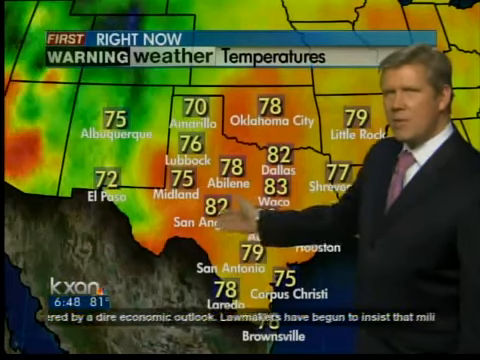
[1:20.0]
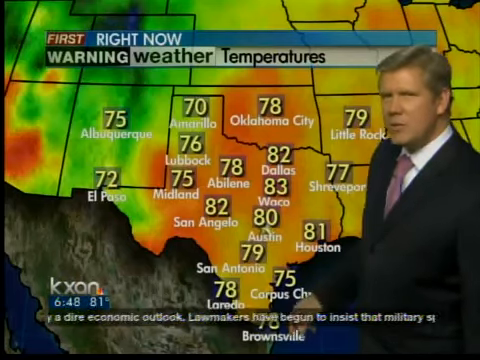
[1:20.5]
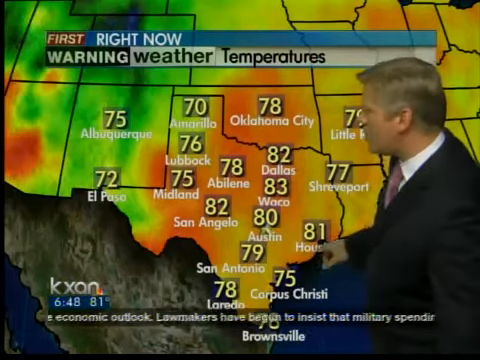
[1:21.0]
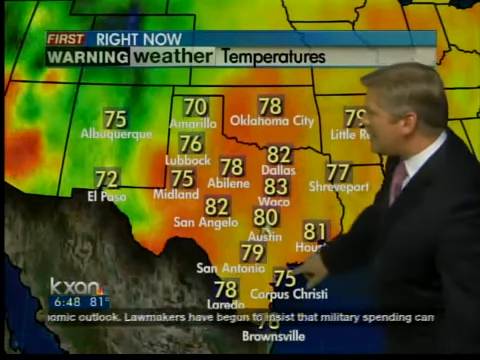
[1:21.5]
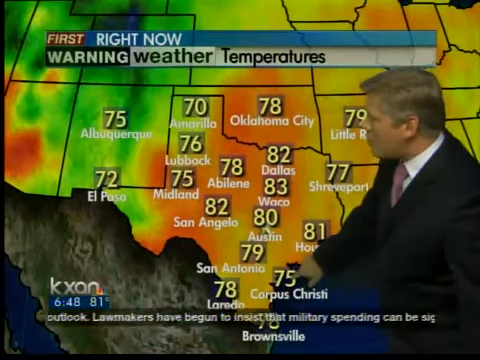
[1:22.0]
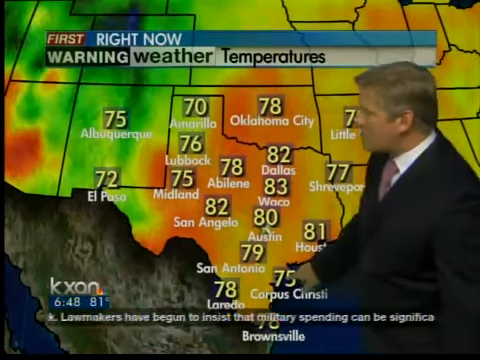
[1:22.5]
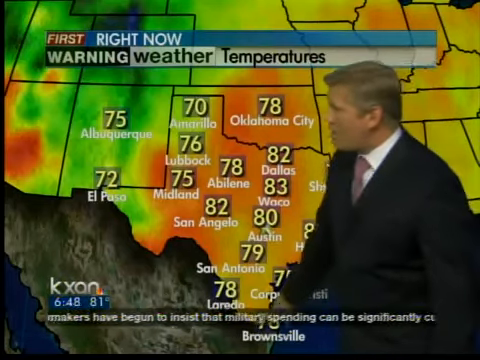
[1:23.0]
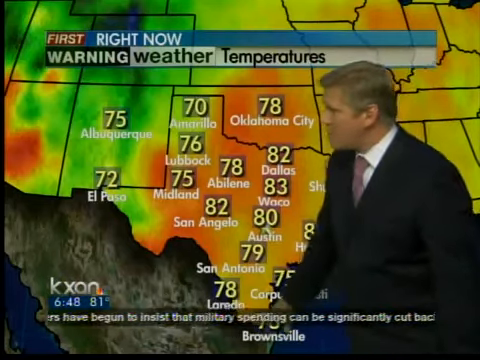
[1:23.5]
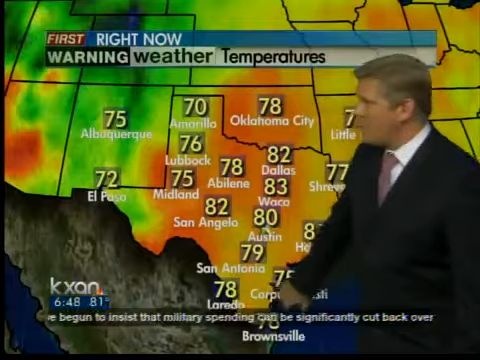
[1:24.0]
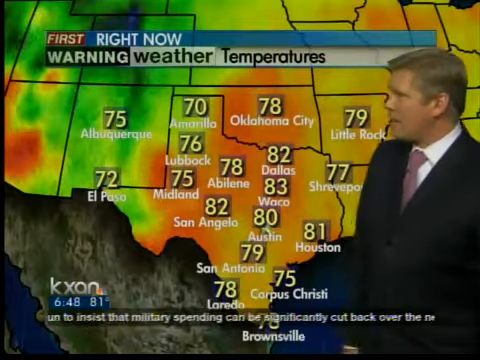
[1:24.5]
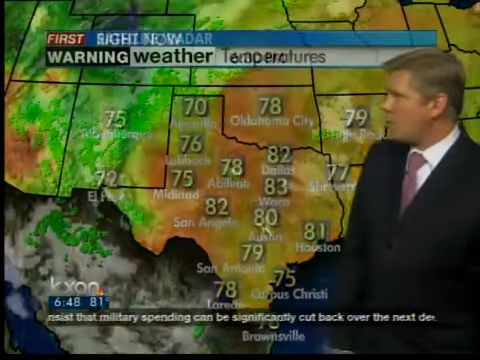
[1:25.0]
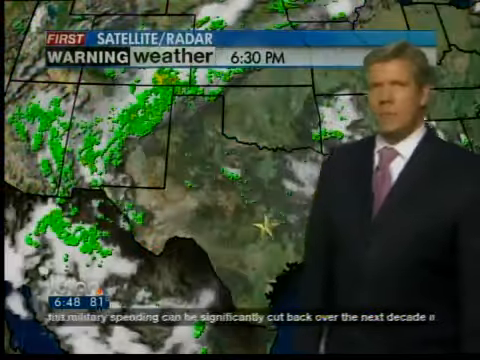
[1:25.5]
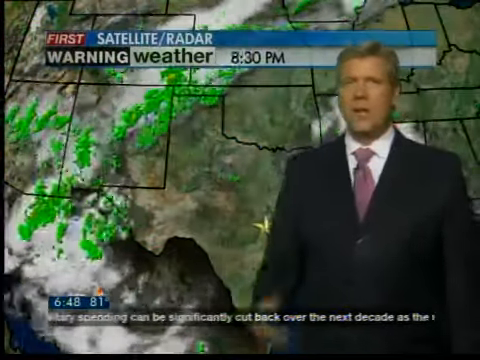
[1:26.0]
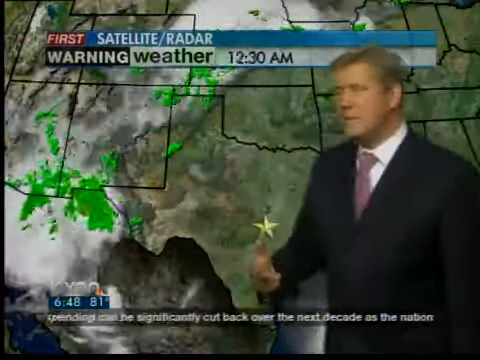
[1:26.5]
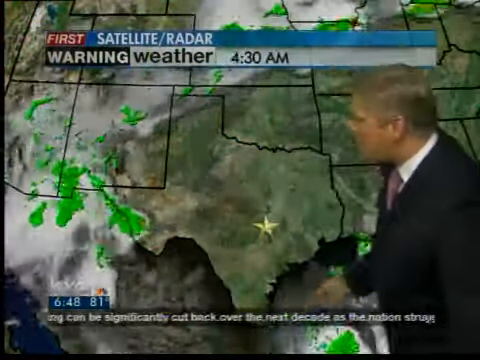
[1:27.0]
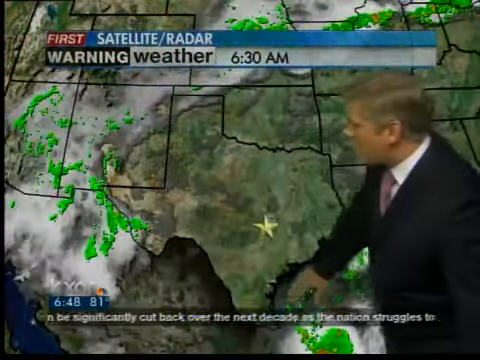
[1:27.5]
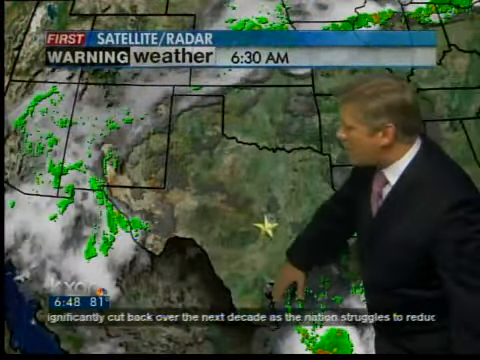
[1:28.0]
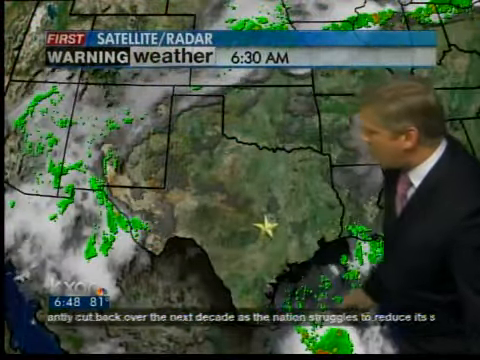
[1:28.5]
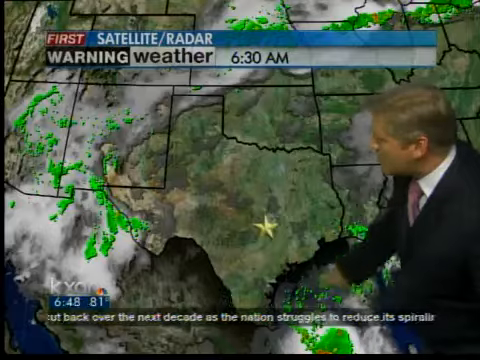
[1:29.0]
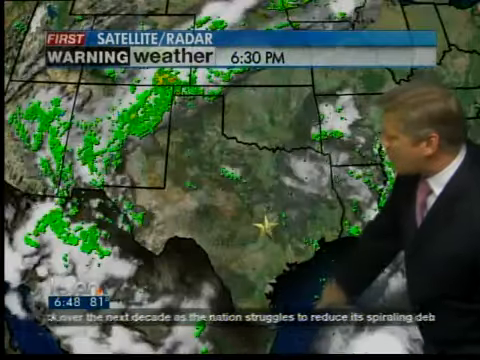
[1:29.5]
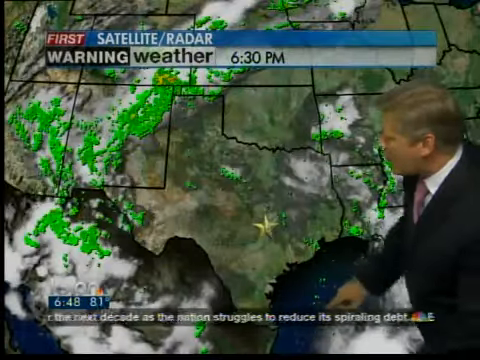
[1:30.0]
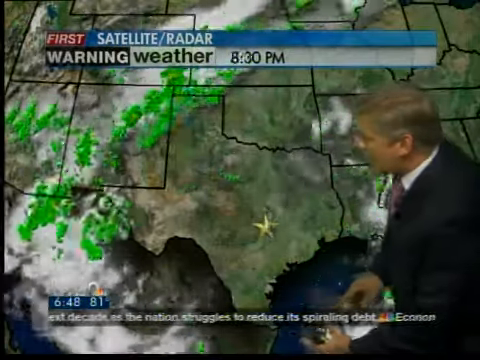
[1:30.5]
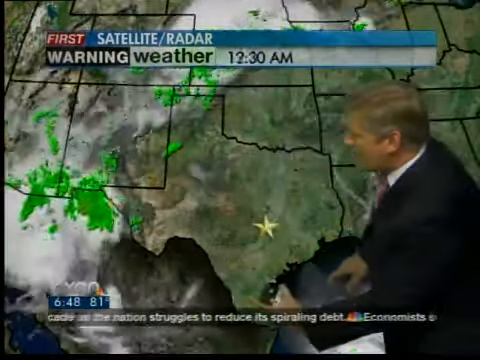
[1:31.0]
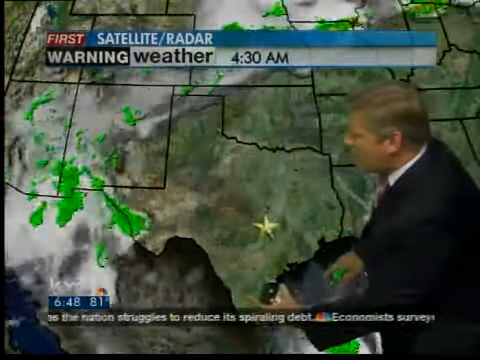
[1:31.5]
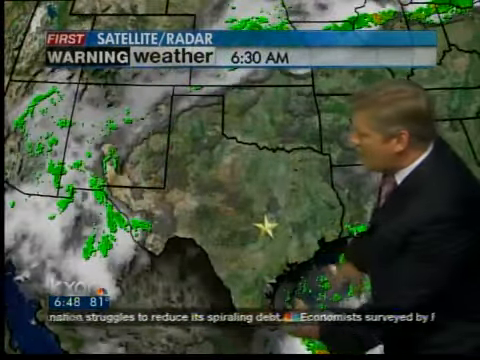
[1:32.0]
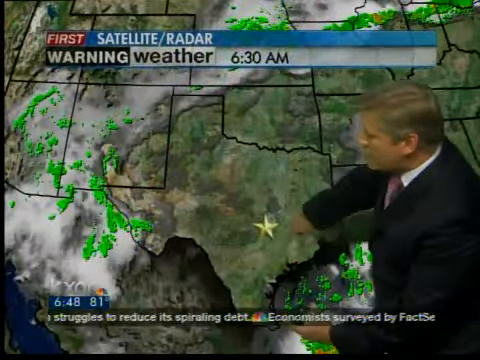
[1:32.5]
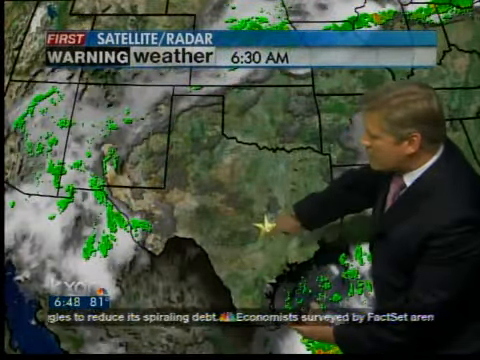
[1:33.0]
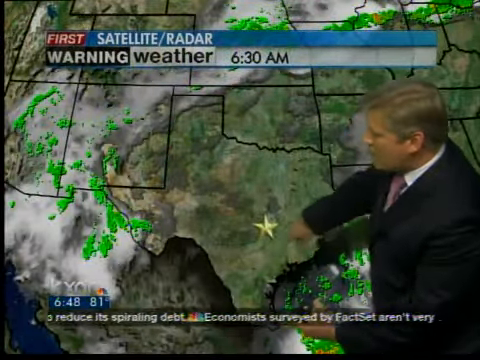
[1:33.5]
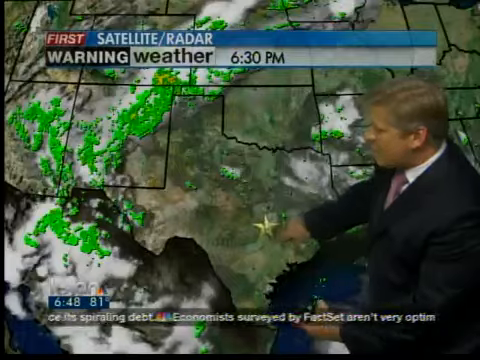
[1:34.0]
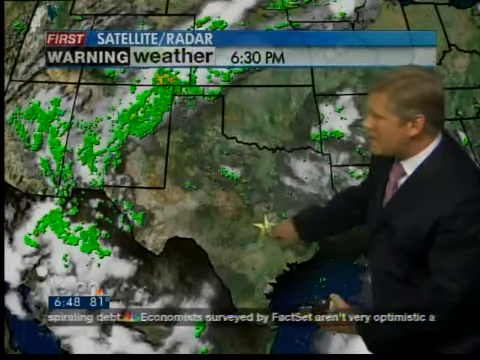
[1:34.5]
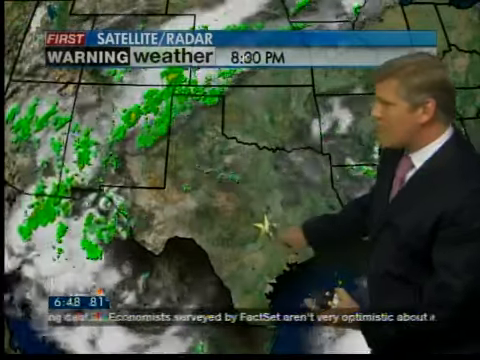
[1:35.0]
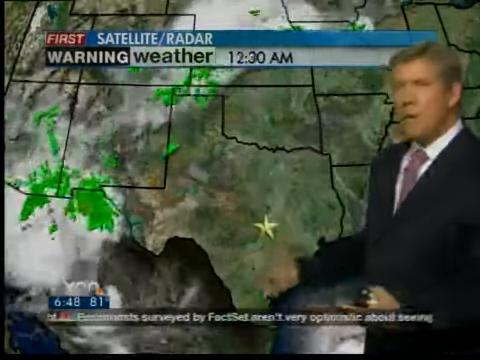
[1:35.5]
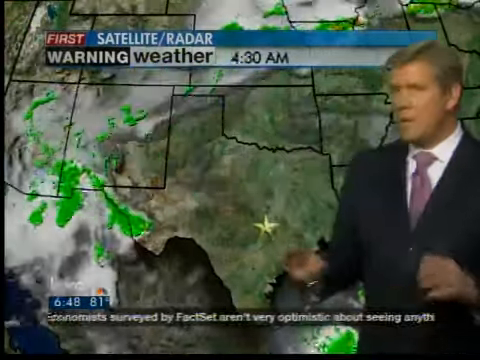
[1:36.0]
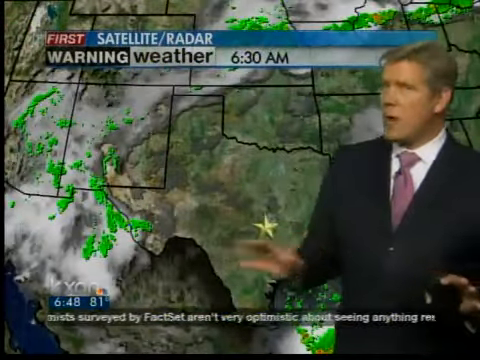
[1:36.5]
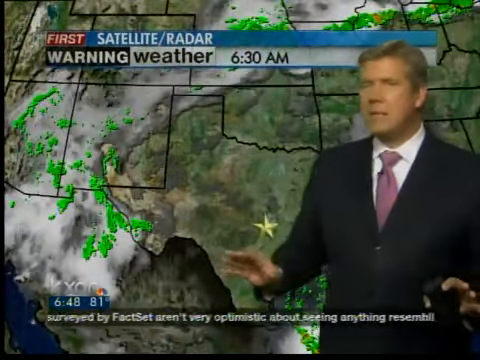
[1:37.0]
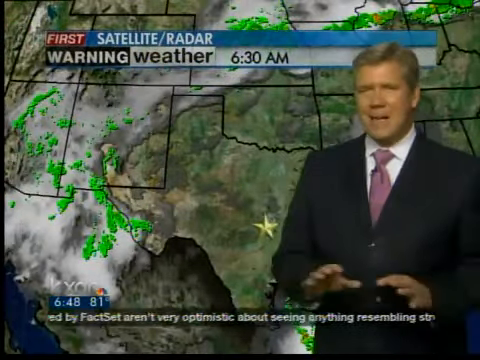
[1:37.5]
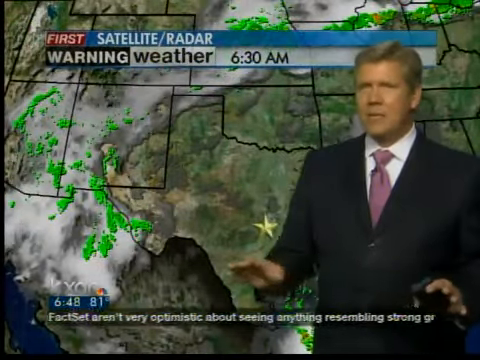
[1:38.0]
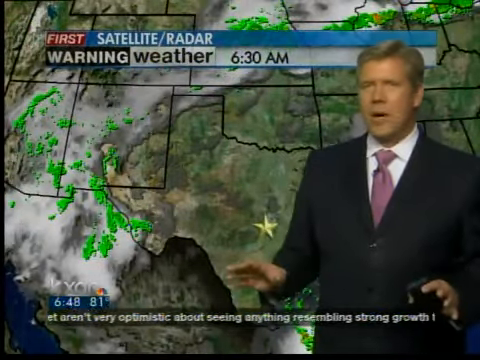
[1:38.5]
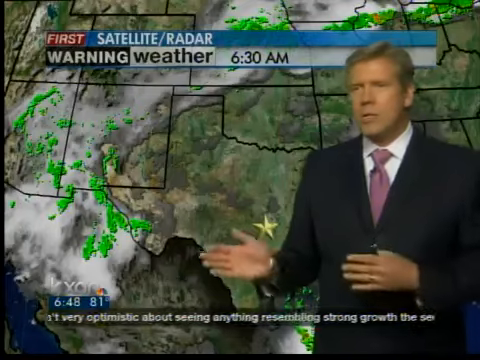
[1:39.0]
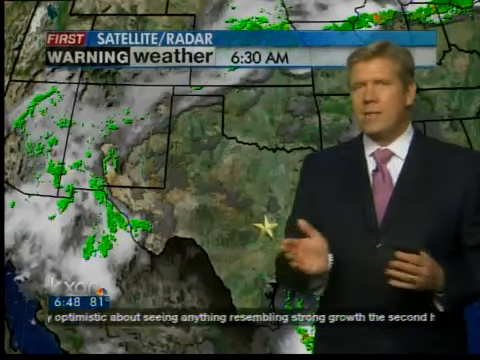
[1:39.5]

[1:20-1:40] The weatherman looks at the viewer, then looks back at the map and points briefly at the temperature above Corpus Christi. He continues to speak as the map turns to a satellite radar map showing cloud patterns billowing around Arizona and New Mexico, with green splotches on them. Texas has a yellow star in the middle of the state, very slightly toward the bottom right. The weatherman keeps looking at the map, then points to the star and kind of moves his finger around it. He looks at the viewer and puts his hands out in a sort of "wait" motion, then kind of moves his hands apart in a spreading motion, repeating this while talking. Then he turns his wrists so his hands are kind of vertically oriented and sways them back and forth.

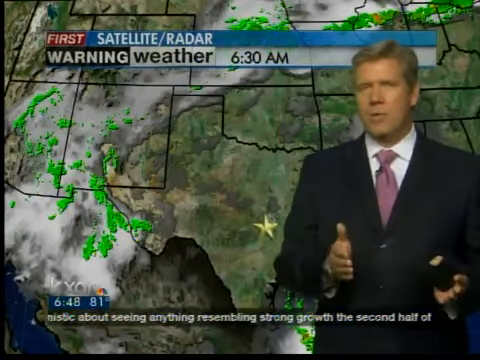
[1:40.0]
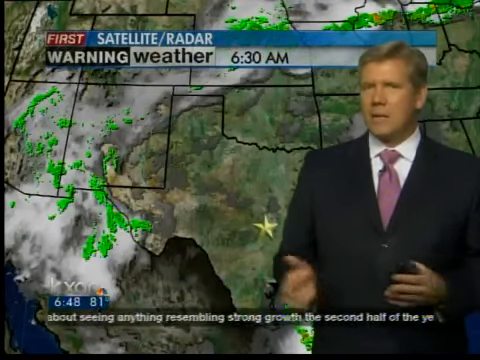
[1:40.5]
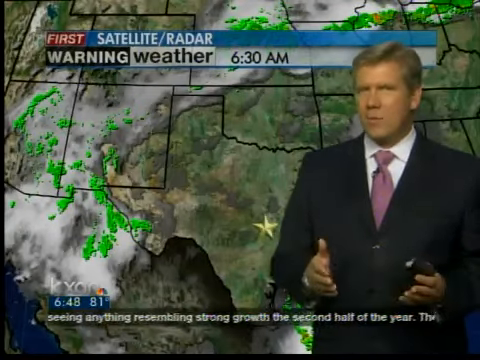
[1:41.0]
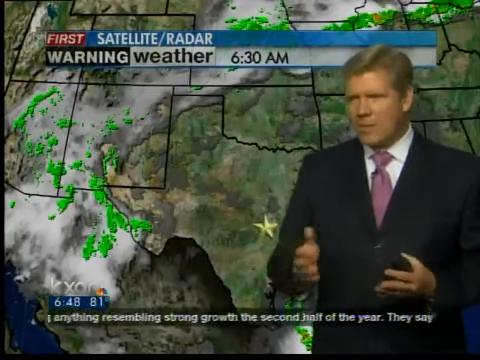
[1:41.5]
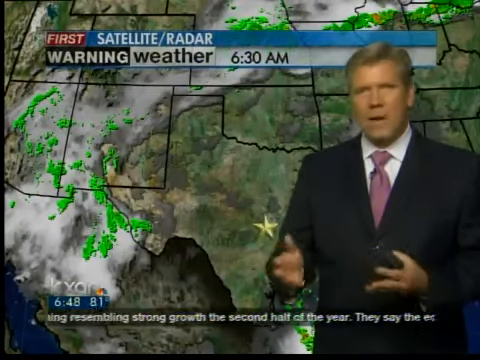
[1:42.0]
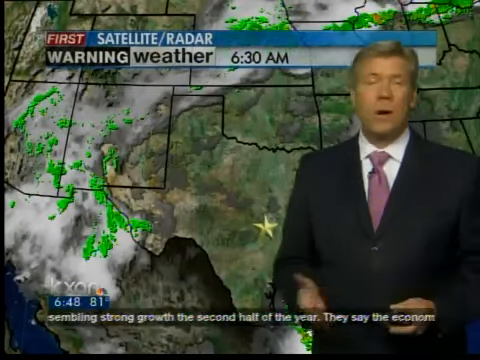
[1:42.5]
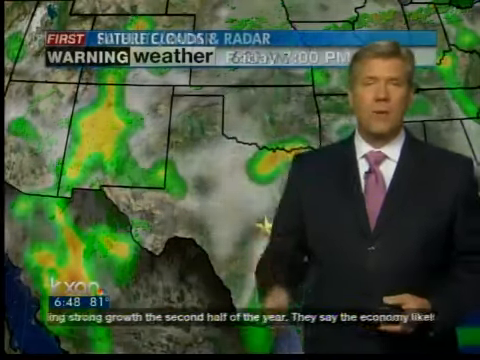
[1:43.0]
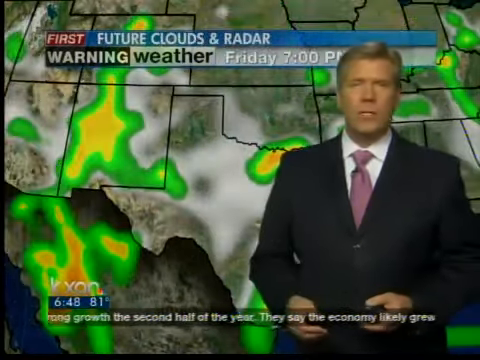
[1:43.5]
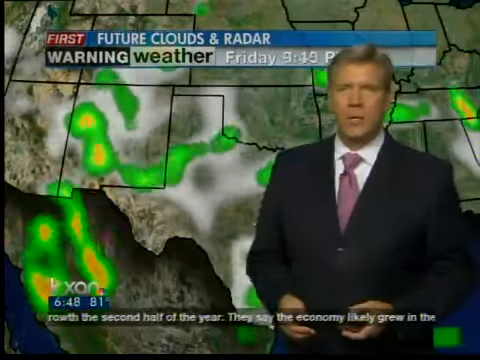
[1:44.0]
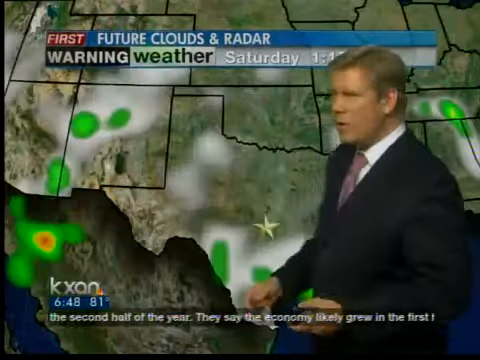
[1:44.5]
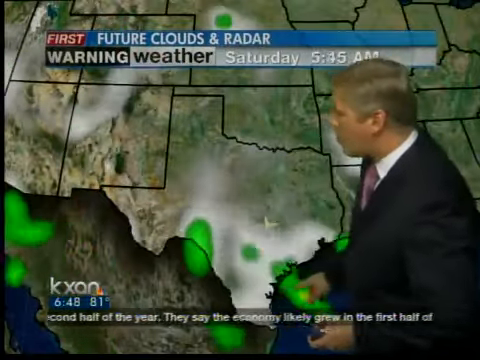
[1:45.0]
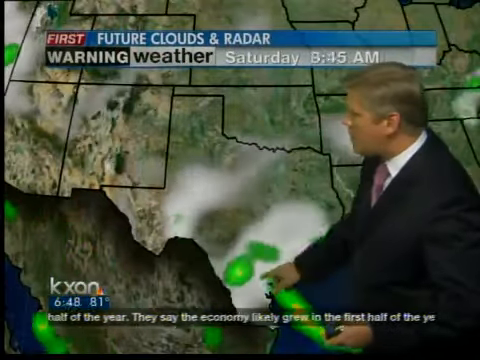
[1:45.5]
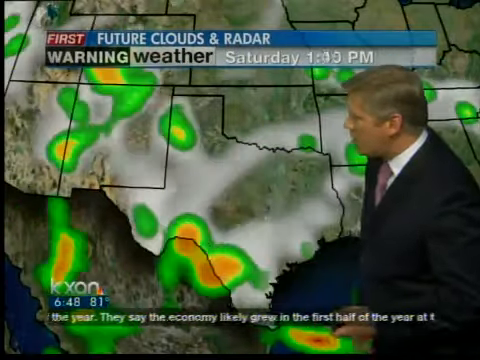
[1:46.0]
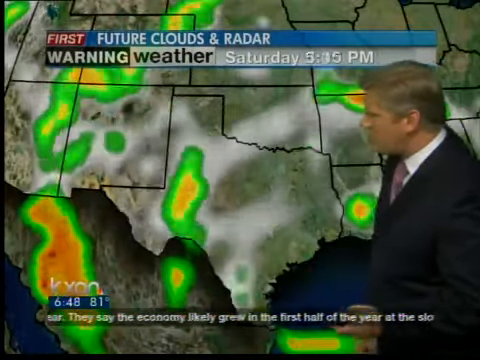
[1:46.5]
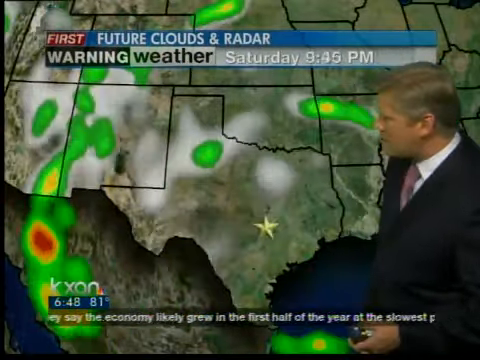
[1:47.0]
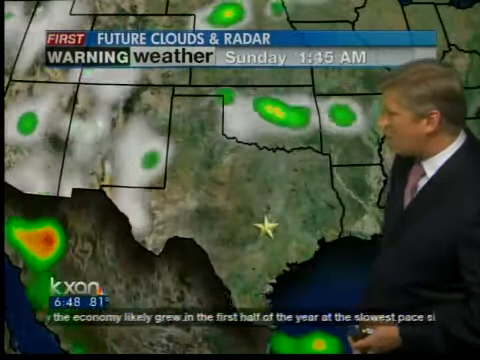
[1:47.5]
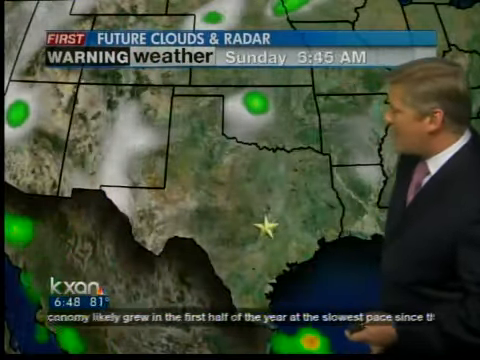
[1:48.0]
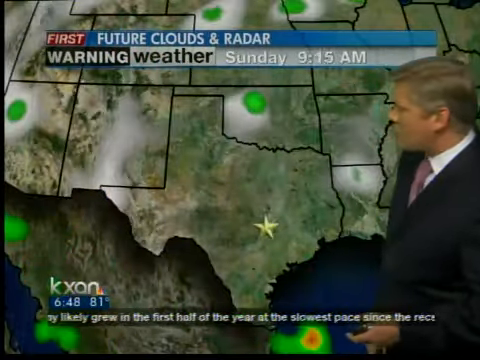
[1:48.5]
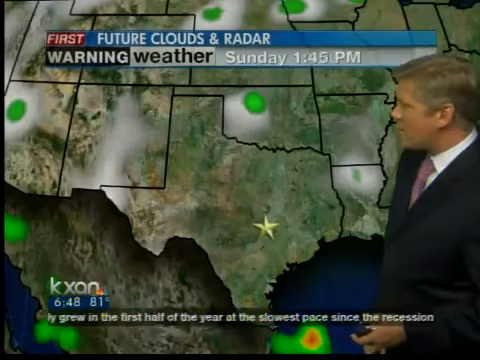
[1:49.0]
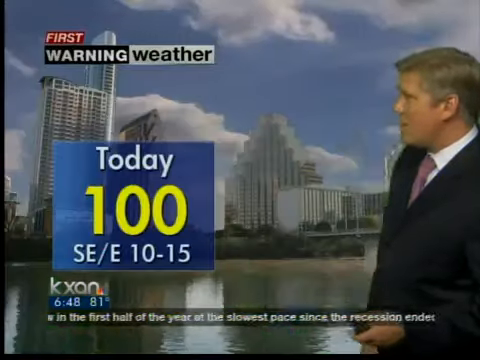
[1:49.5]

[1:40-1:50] The weatherman continues to kind of move his hands back and forth while talking to the viewer. The clouds are no longer billowing and the map is not moving. He looks at the viewer again and throws his hand slightly over his shoulder. A bunch of fog then covers the map, with neon green splotches around New Mexico, to the upper left of Mexico, and to the upper right of Texas, plus a couple of green splotches near Nebraska. The splotches kind of fade and move along with the fog, then reappear, as the fog disappears and reappears in different patterns. The weatherman looks back at the map. Above him, the top bar says "future clouds and radar," and next to the warning weather title the time is shown, rapidly progressing through days and times as the fog and green splotches change.